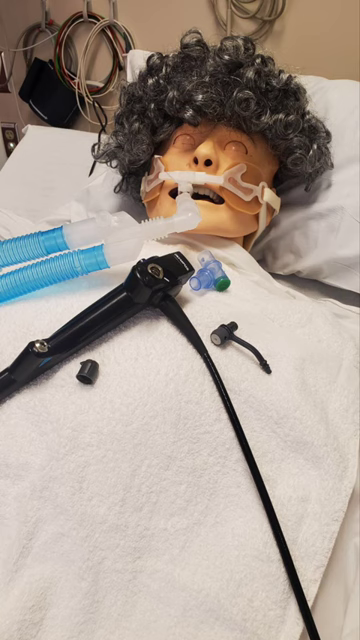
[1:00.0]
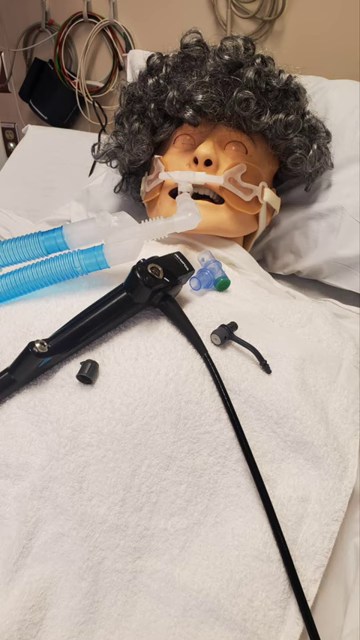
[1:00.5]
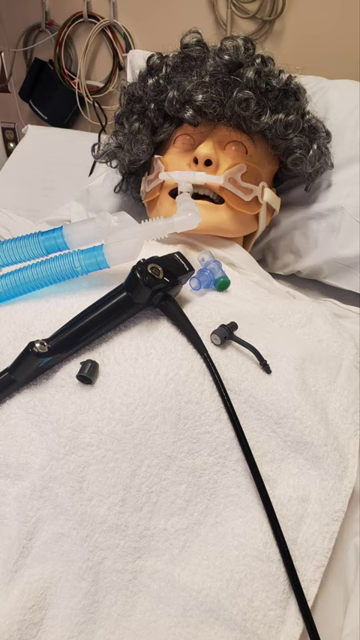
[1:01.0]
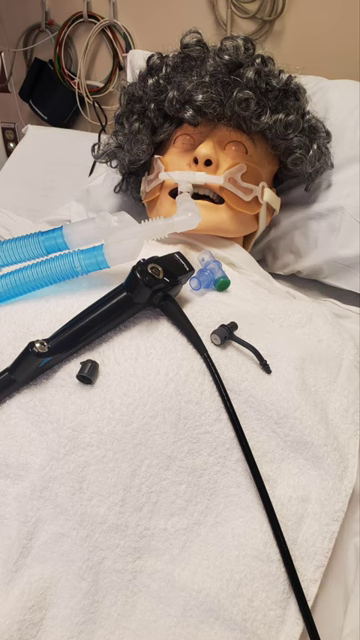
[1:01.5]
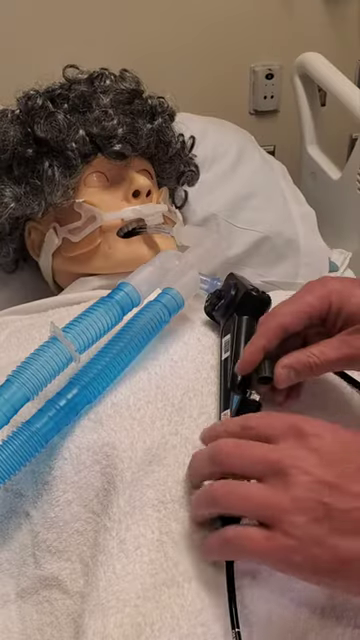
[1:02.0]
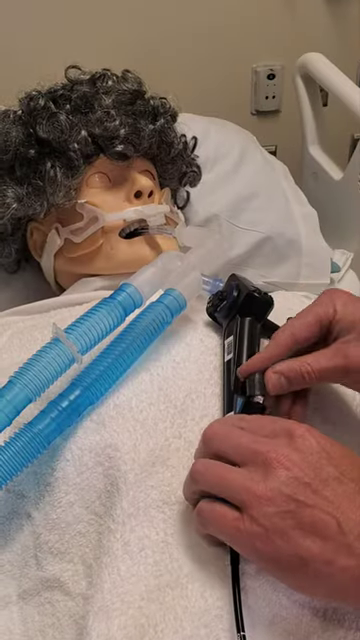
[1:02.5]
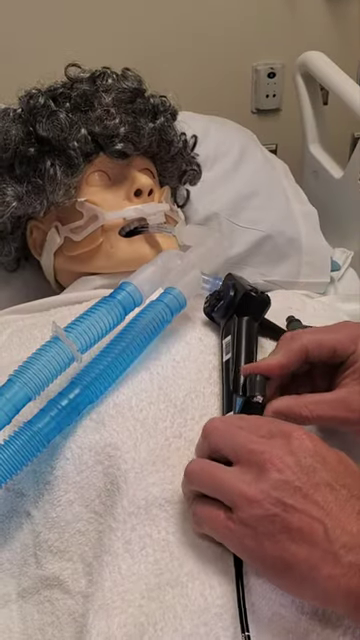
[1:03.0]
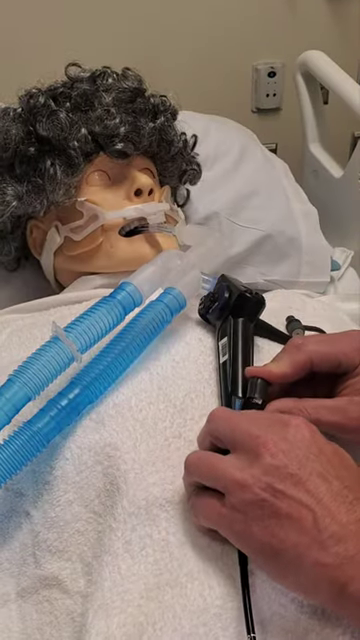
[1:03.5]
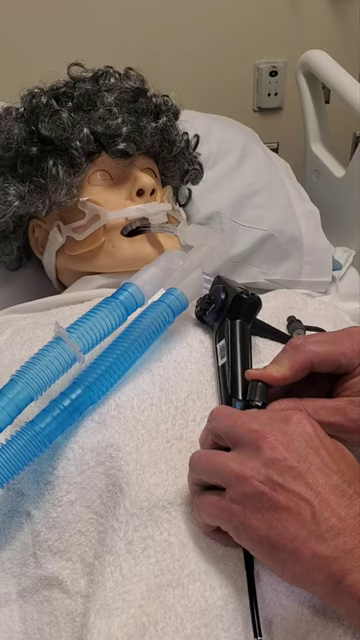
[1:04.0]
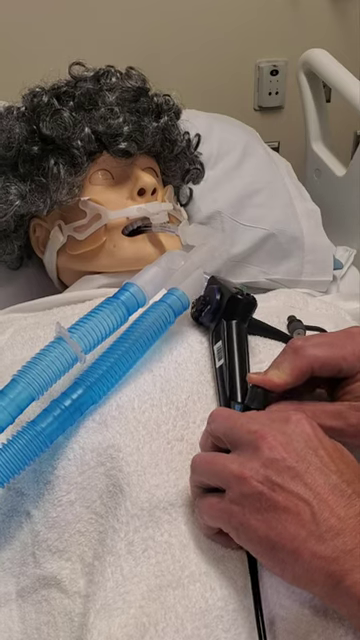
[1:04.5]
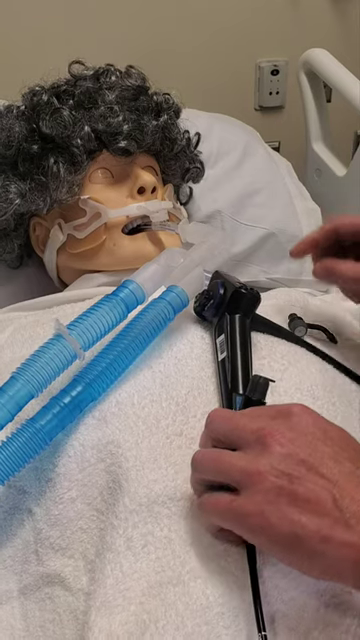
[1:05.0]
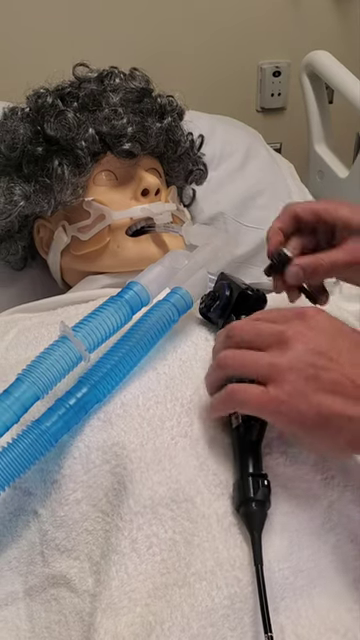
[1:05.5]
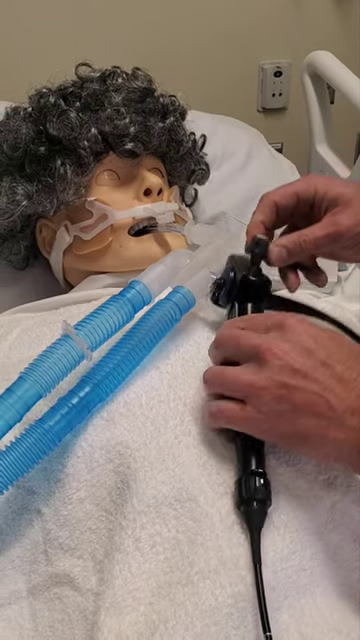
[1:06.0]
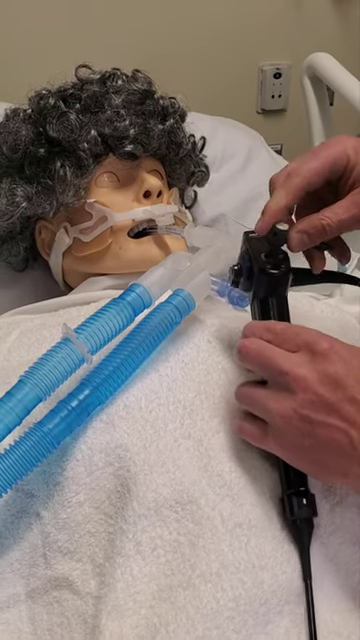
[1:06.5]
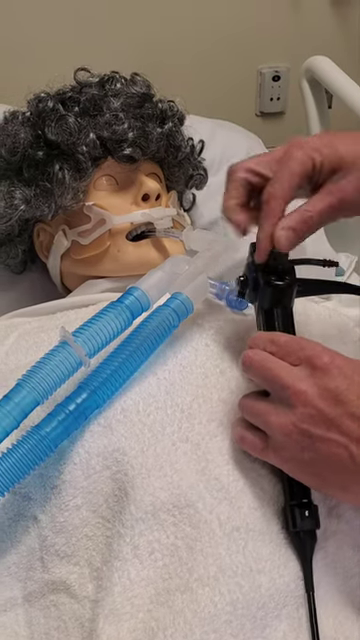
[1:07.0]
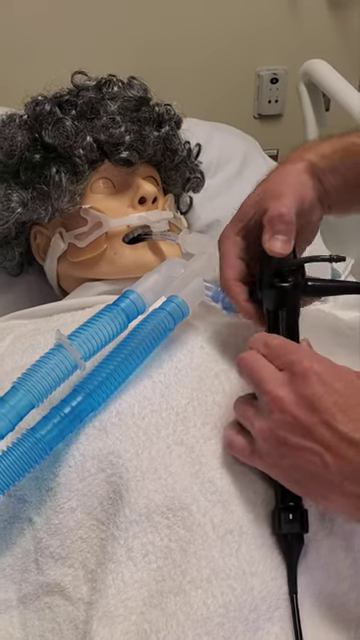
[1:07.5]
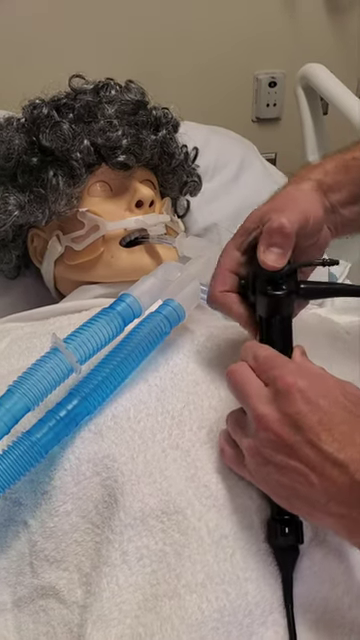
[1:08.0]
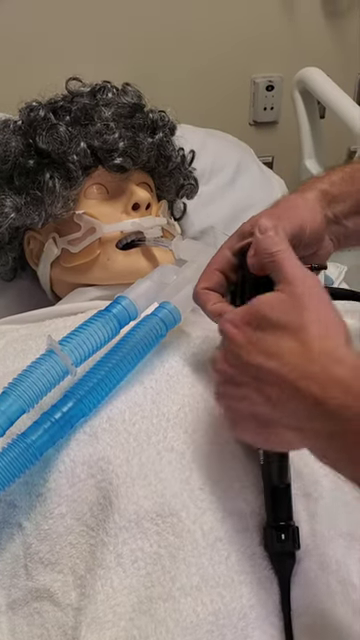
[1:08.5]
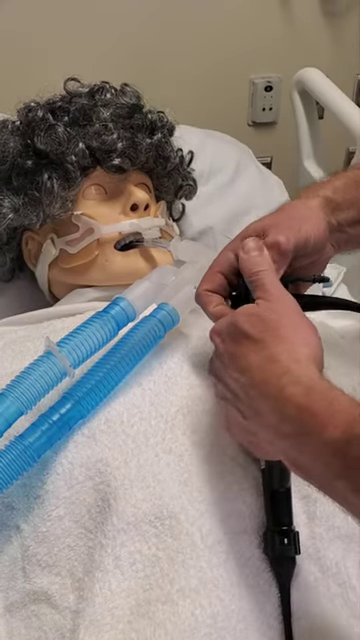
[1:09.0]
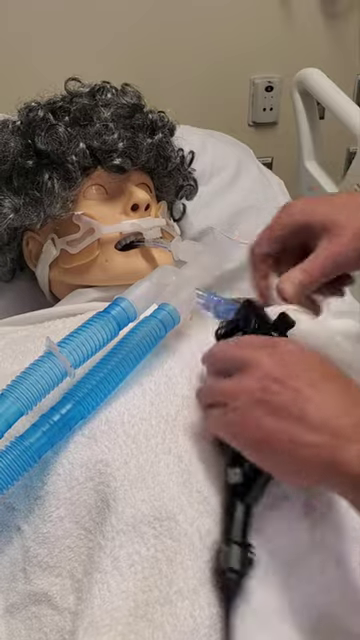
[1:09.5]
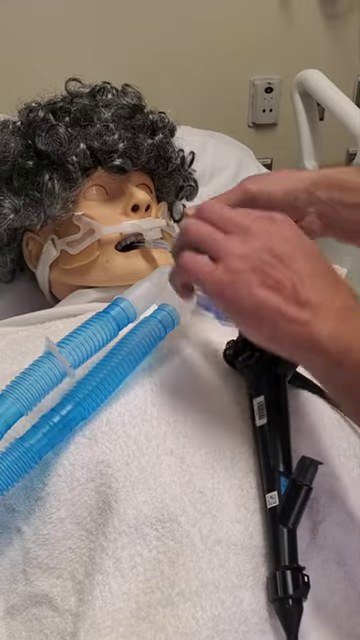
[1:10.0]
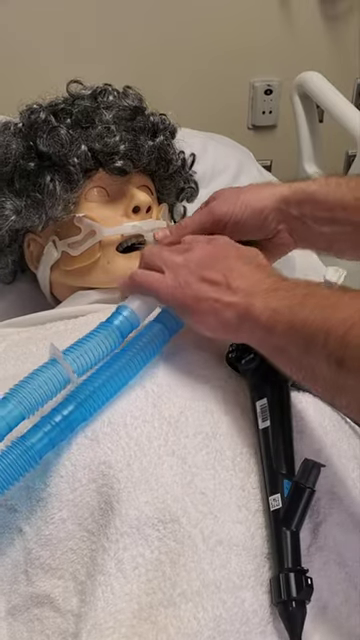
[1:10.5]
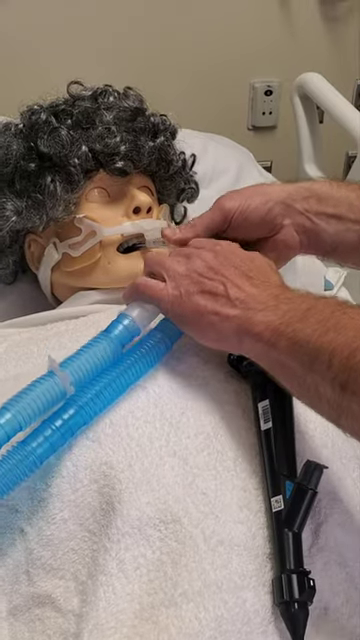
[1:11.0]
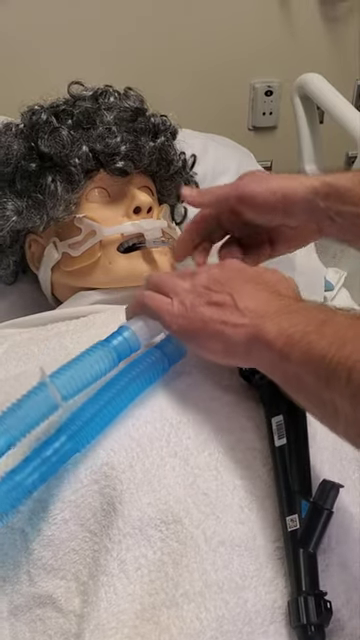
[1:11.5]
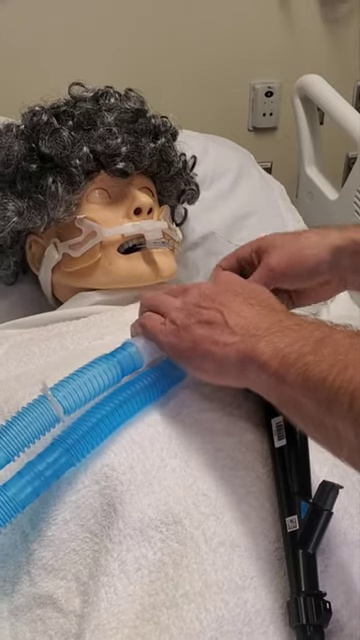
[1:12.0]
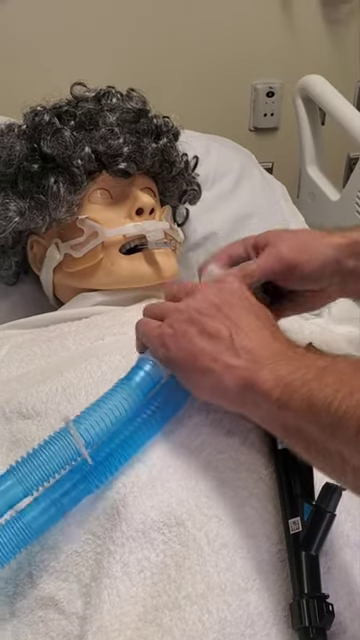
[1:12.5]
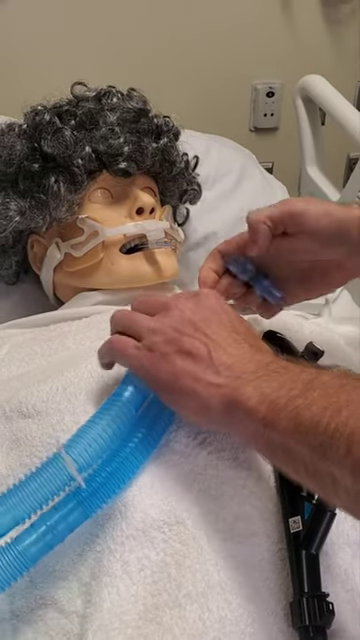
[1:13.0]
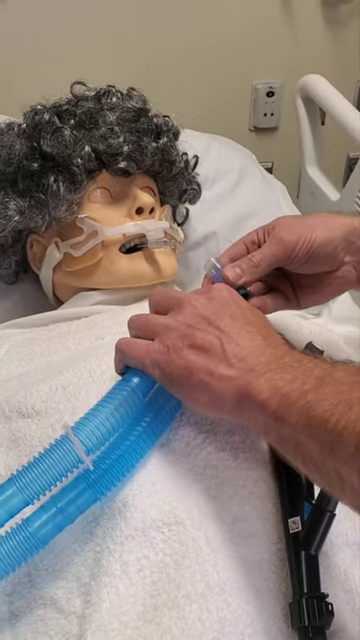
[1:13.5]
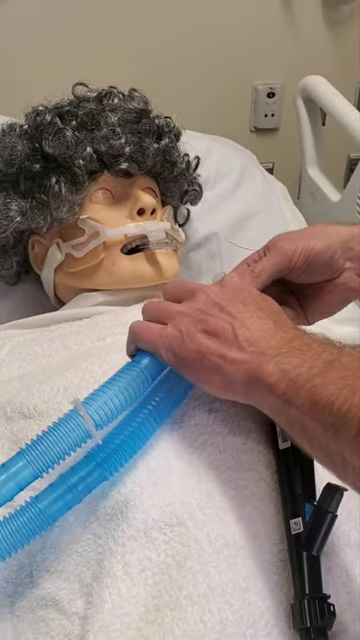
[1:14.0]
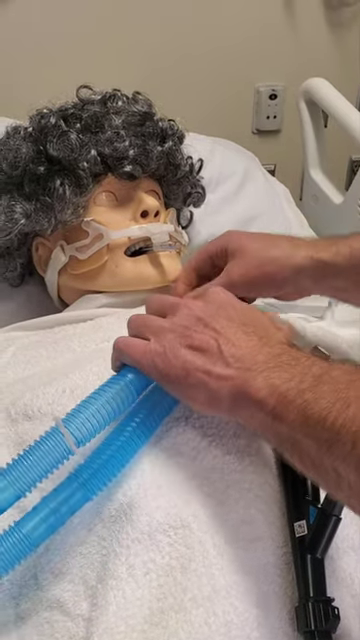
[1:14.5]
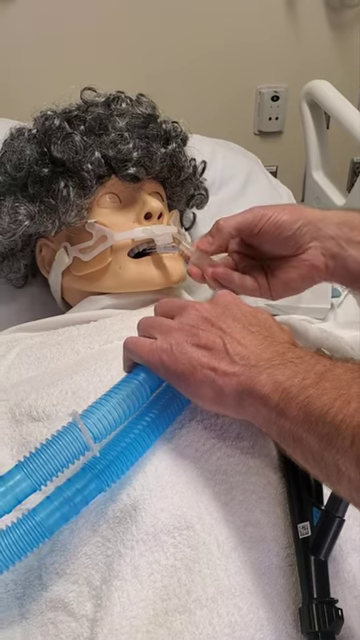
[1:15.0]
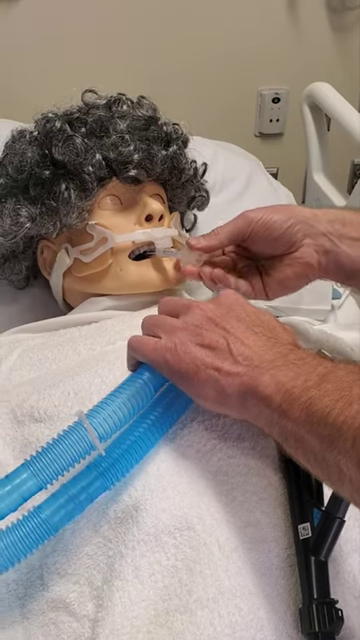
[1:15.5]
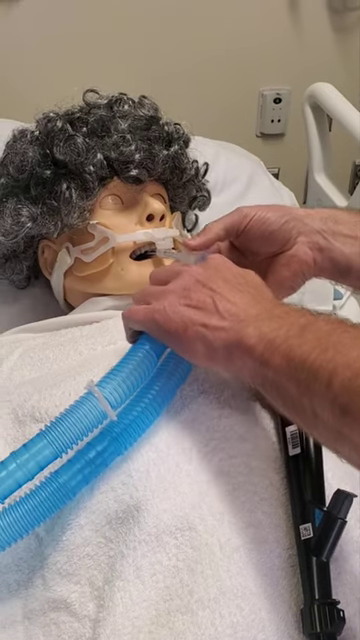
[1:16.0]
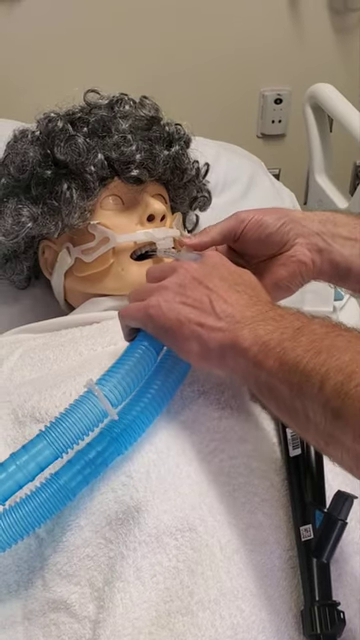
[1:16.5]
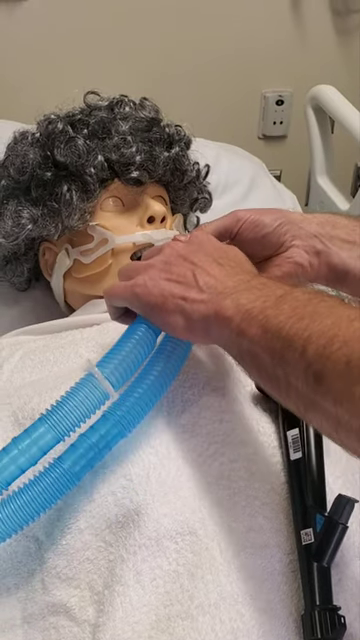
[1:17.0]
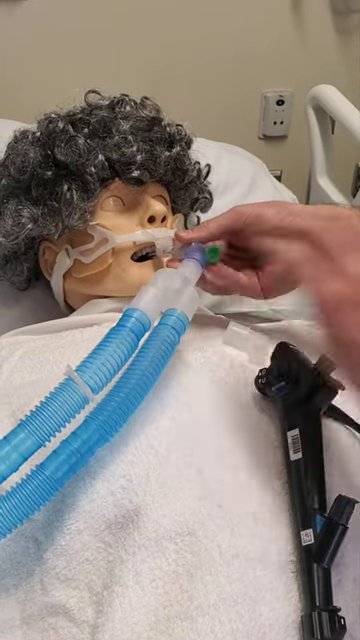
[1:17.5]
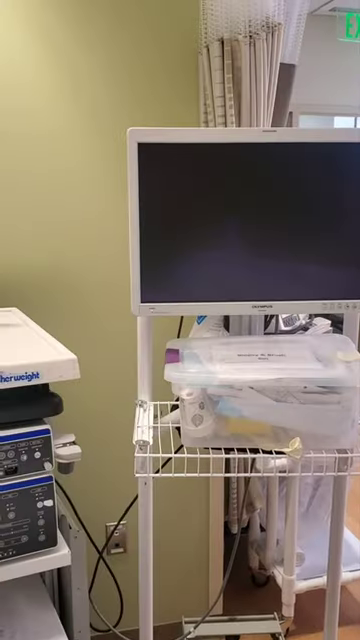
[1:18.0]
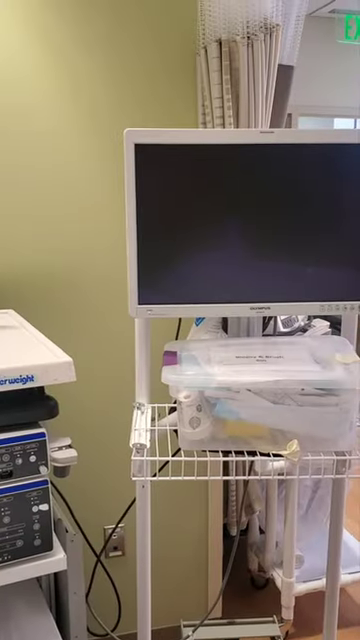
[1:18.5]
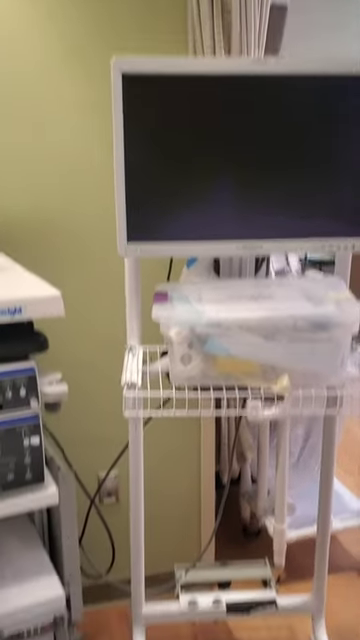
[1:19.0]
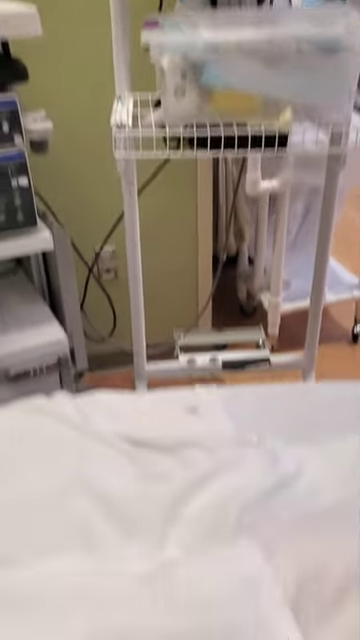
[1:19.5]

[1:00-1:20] The mannequin lies in a hospital bed, and the focus is on the black handheld device. The mannequin looks like it has tubes put in its mouth, connected to what looks like a breathing machine. Someone uses the handheld device, connecting it to the breathing tube. The device connects to the breathing tubes, apparently with some type of adapter that links the breathing tube and the device together. The actual connection of the handheld device to the breathing hose is not shown.